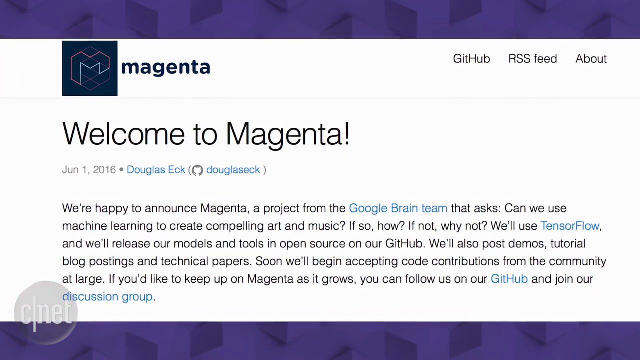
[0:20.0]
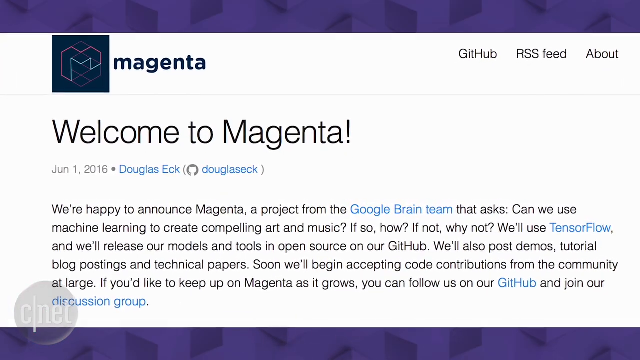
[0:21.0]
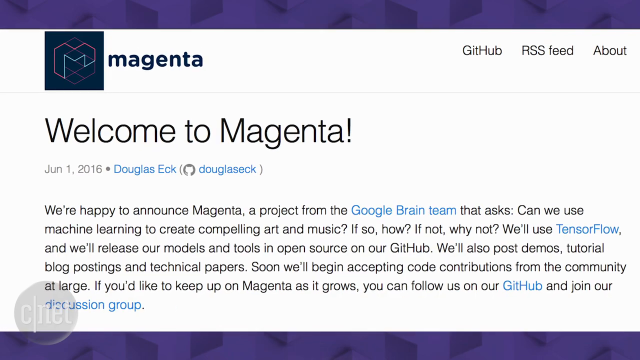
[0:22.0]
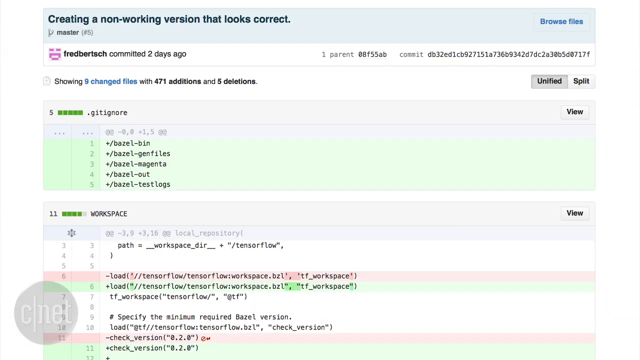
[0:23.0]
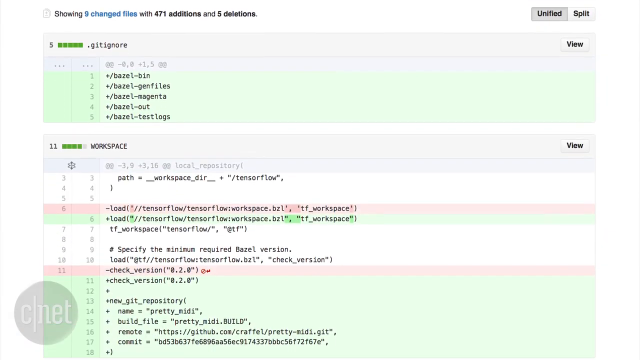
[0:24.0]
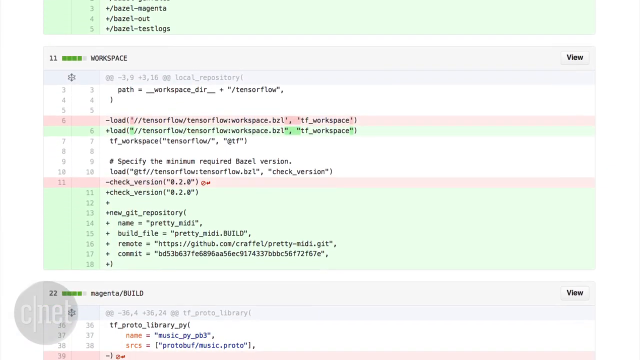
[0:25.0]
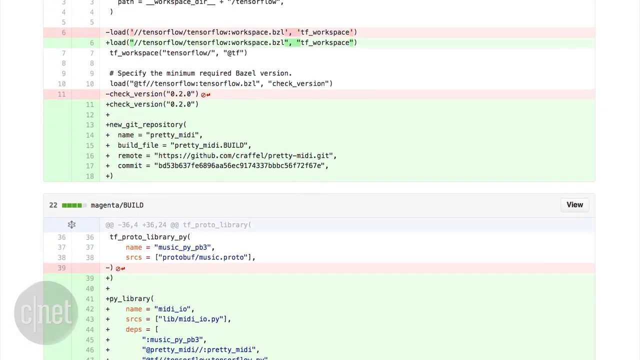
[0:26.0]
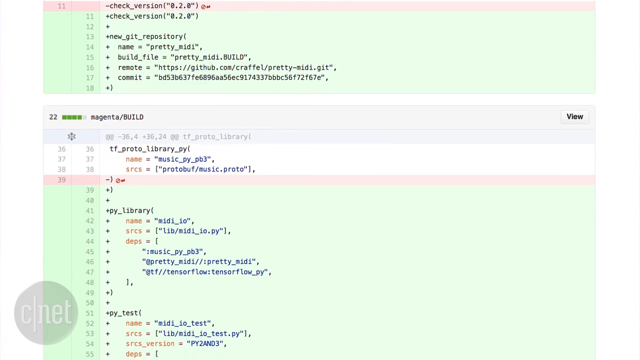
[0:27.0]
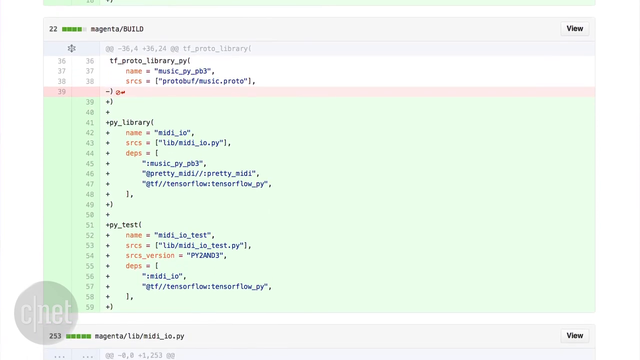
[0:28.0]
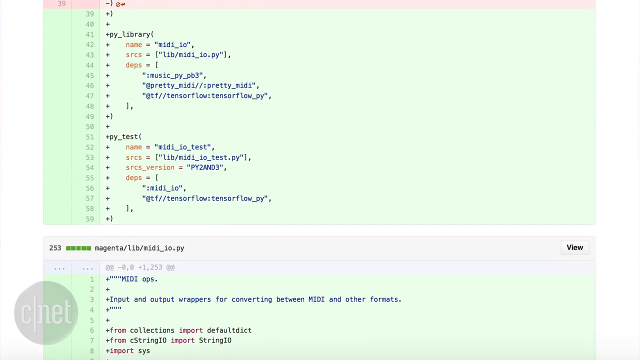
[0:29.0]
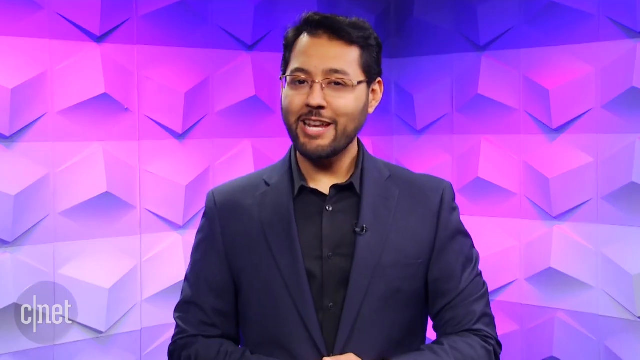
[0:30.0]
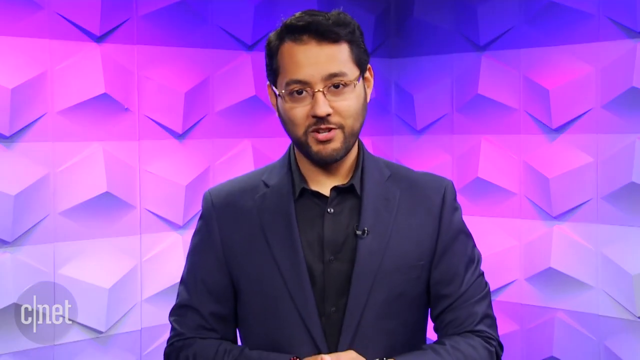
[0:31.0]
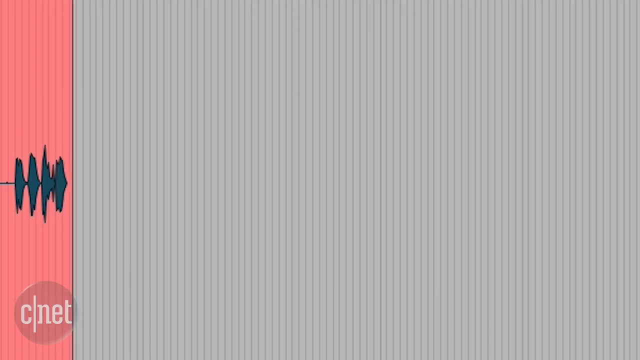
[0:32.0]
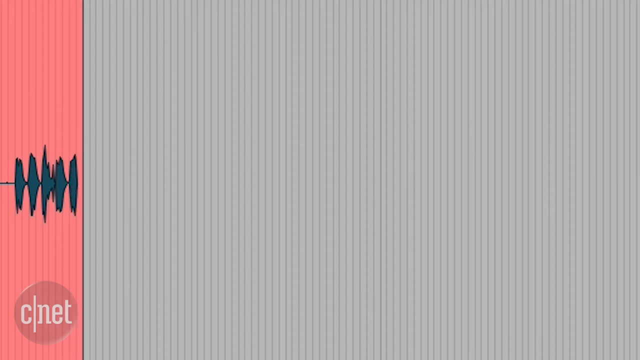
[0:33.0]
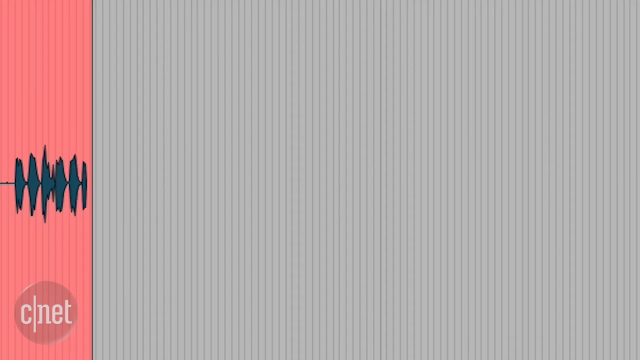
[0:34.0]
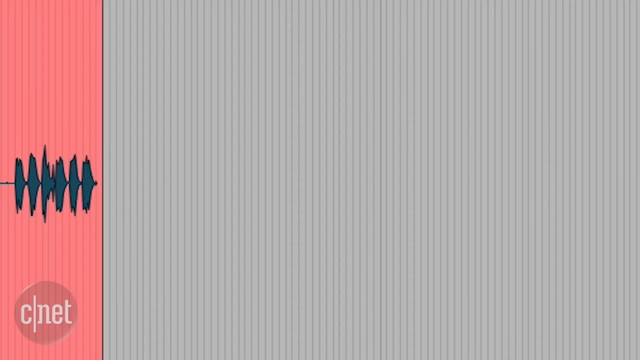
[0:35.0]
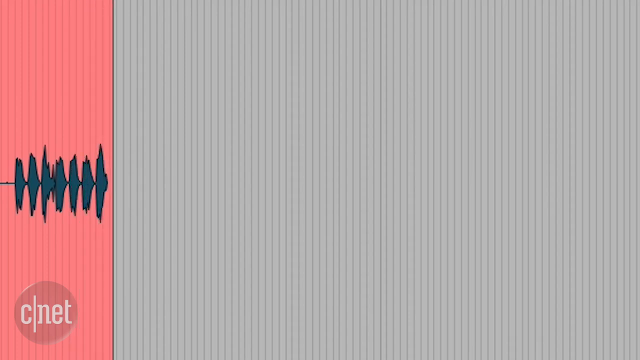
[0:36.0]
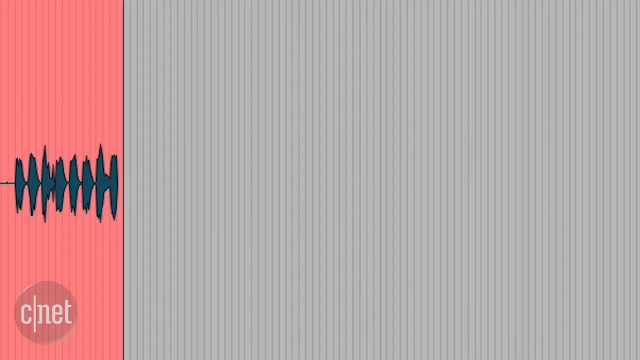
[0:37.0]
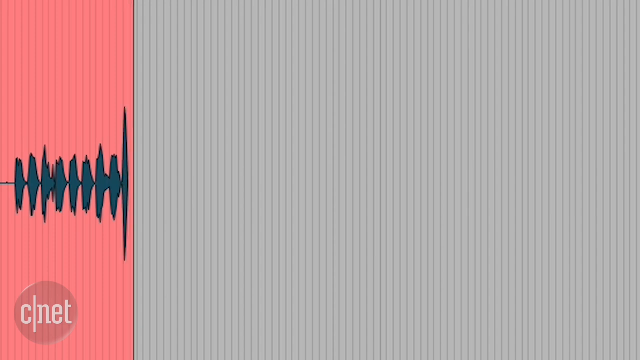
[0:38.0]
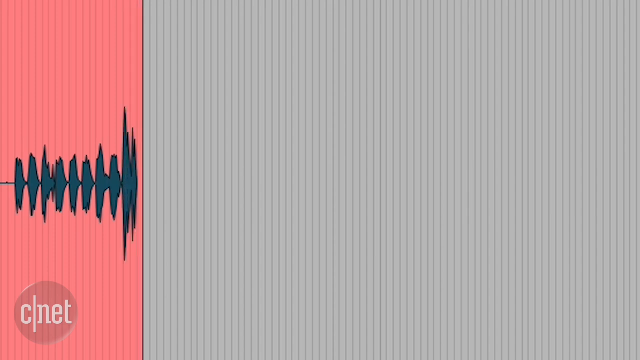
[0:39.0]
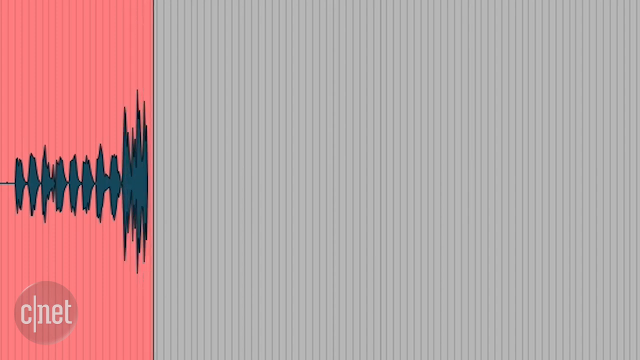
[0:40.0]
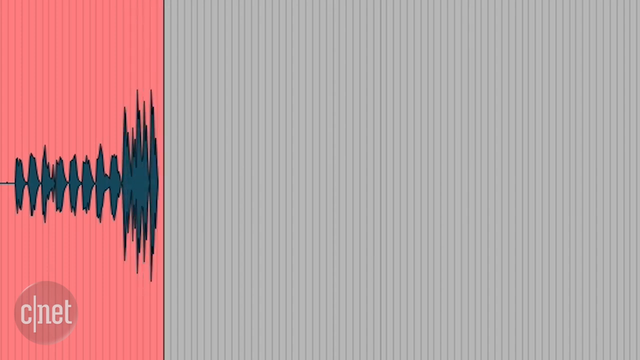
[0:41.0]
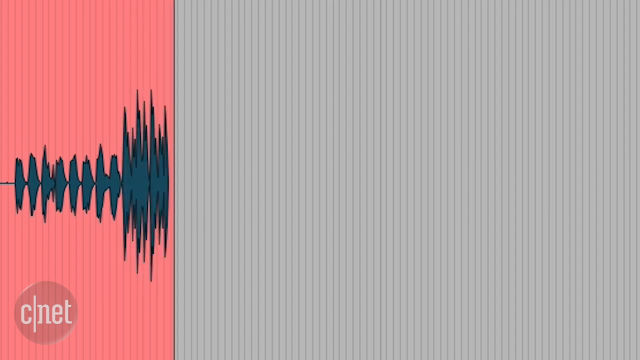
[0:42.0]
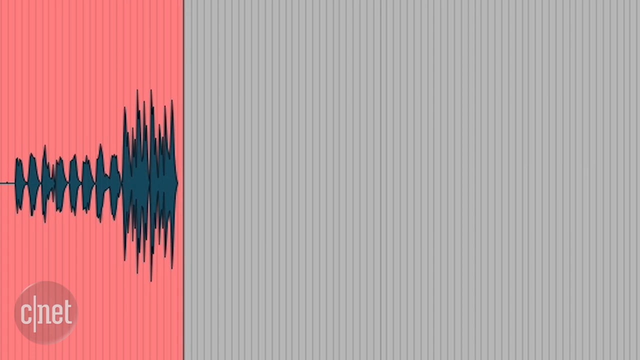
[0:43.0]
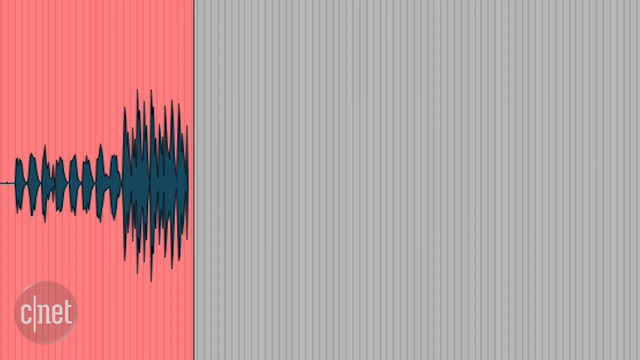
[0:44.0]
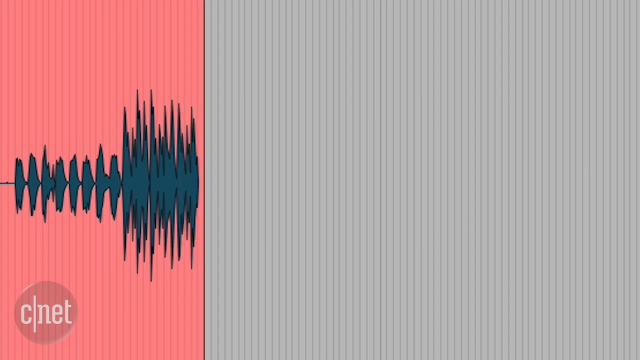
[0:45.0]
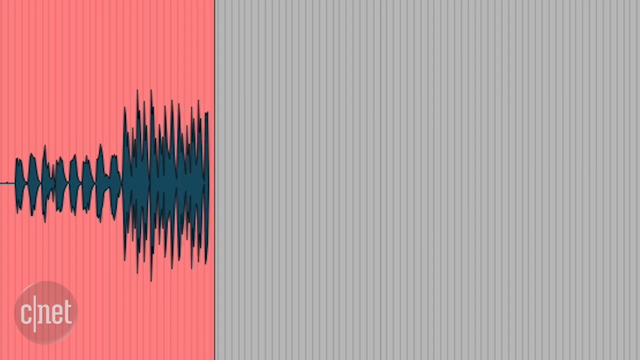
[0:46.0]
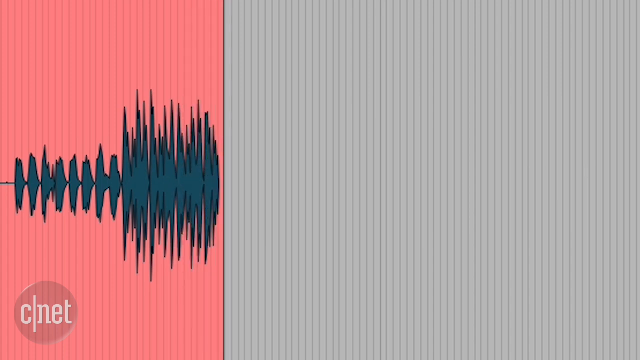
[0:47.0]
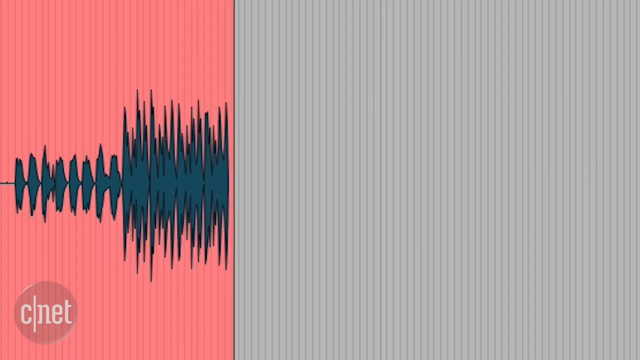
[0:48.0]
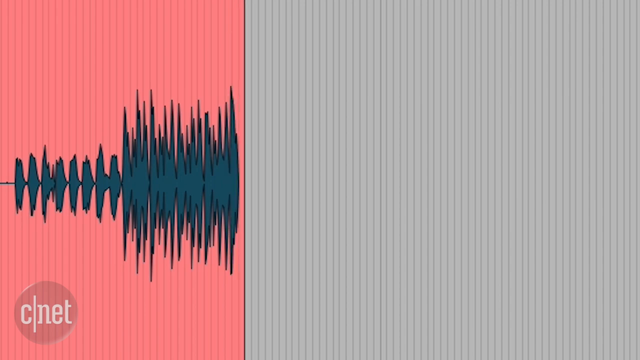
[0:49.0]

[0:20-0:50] The Magenta group is presented: a group made by Douglas Eck, whose username is Douglas Eck. A post dated June 1st, 2016 announces that they are happy to introduce Magenta, a project from the Google Brain team that is an AI able to make music. Lines of extremely complicated code are then shown. The AI is shown creating music from scratch, and the song appears to go from a light tone to a much louder one, possibly an intro followed by a first verse, all made by the AI.